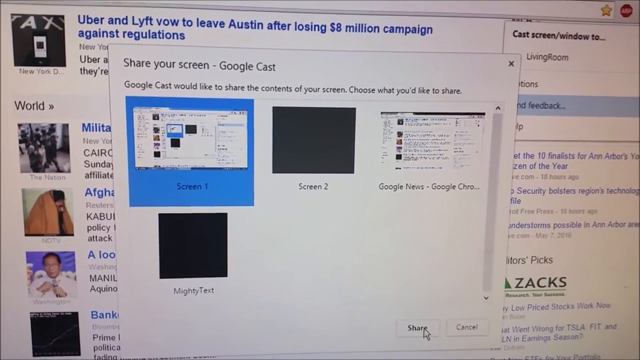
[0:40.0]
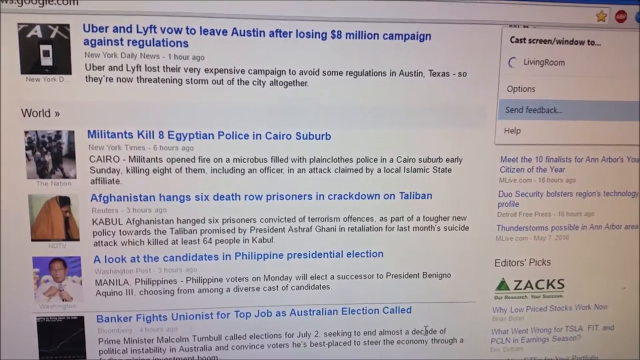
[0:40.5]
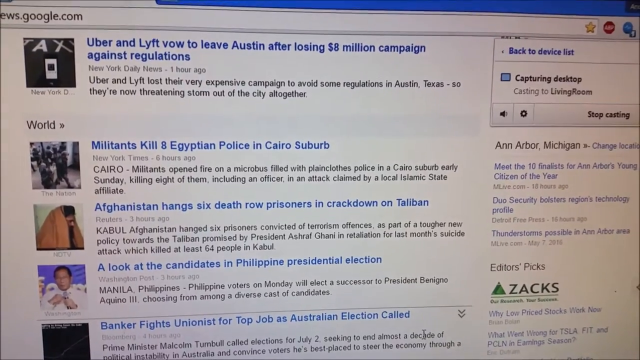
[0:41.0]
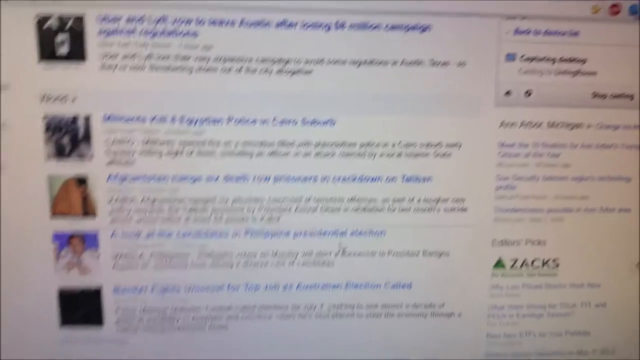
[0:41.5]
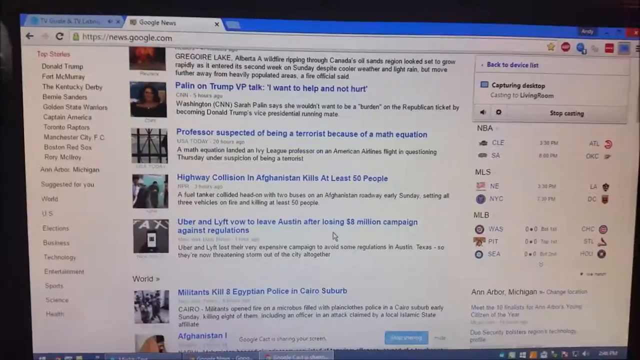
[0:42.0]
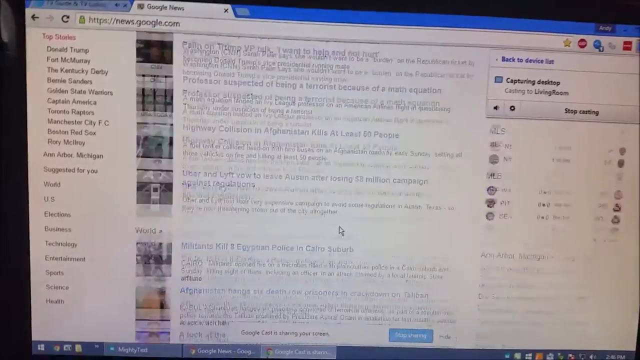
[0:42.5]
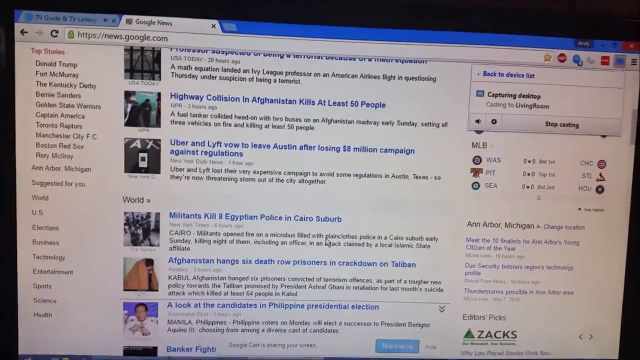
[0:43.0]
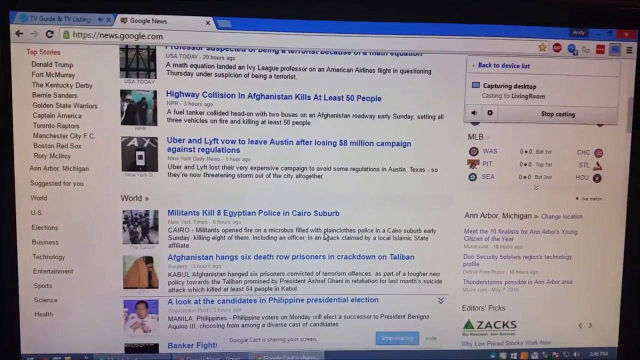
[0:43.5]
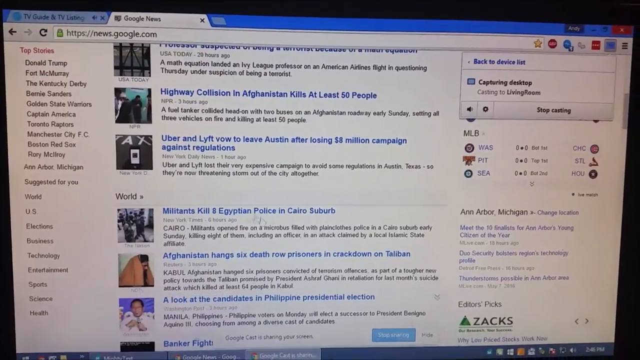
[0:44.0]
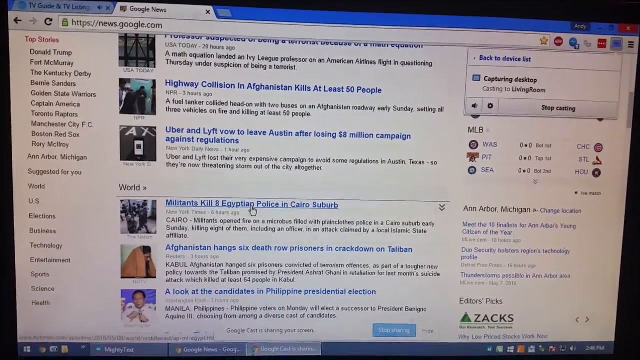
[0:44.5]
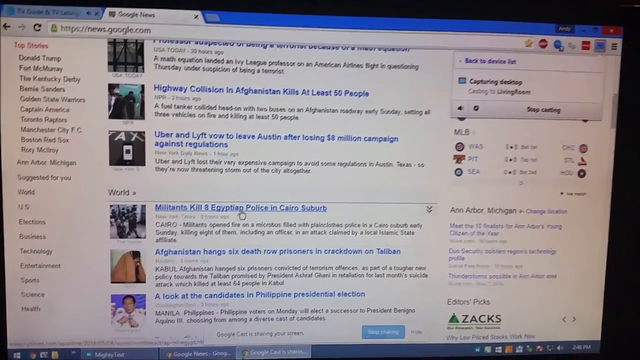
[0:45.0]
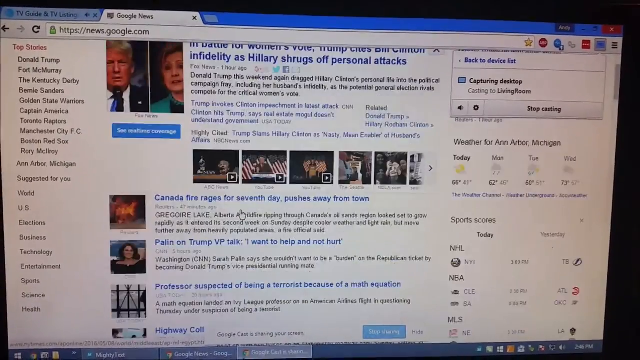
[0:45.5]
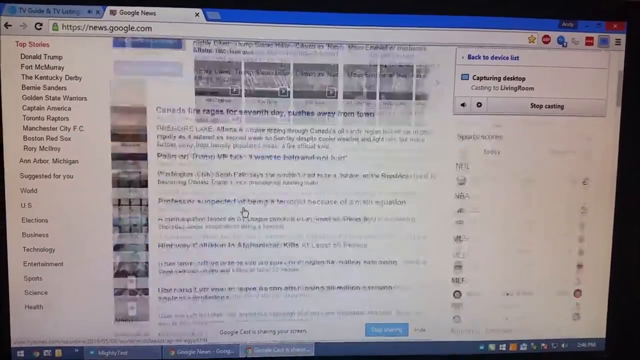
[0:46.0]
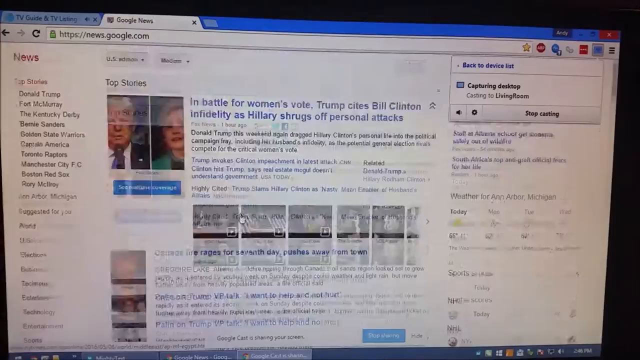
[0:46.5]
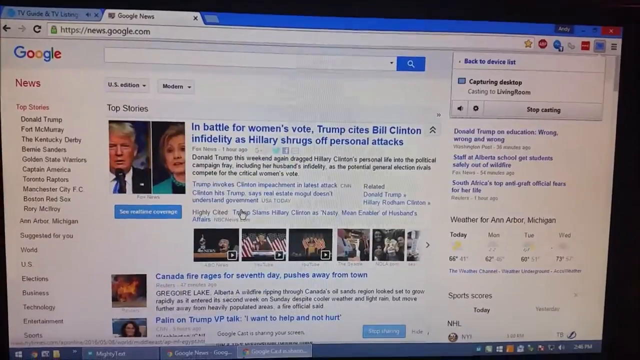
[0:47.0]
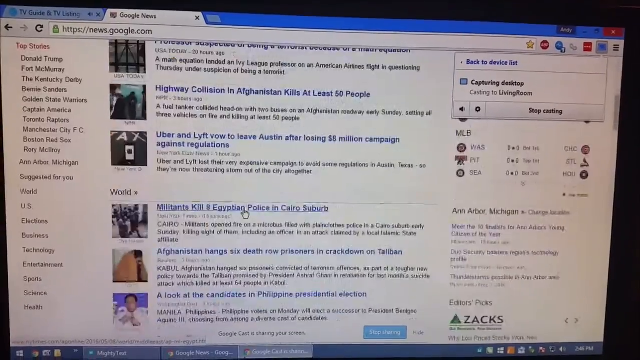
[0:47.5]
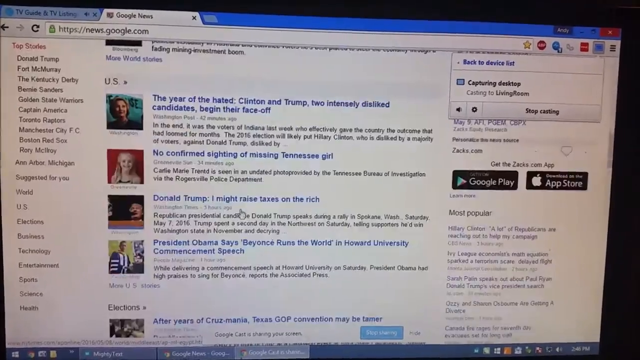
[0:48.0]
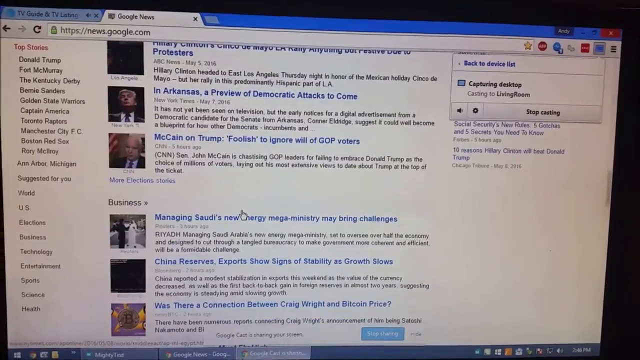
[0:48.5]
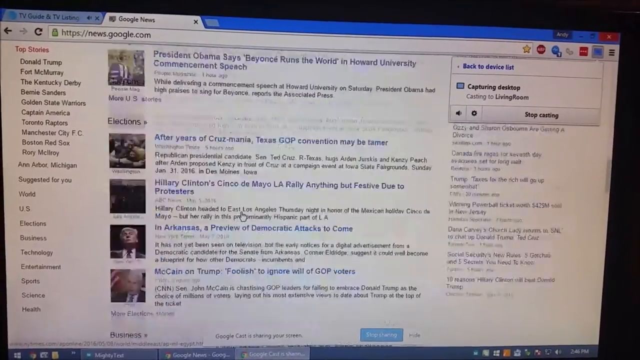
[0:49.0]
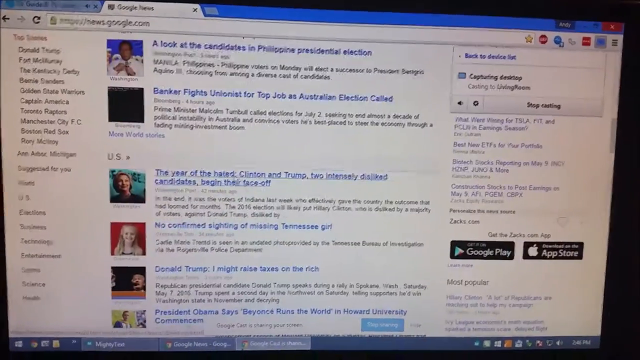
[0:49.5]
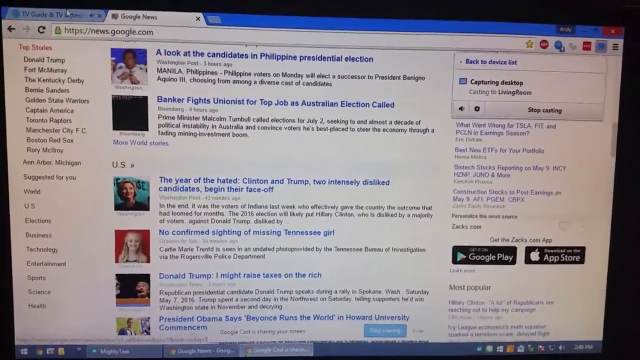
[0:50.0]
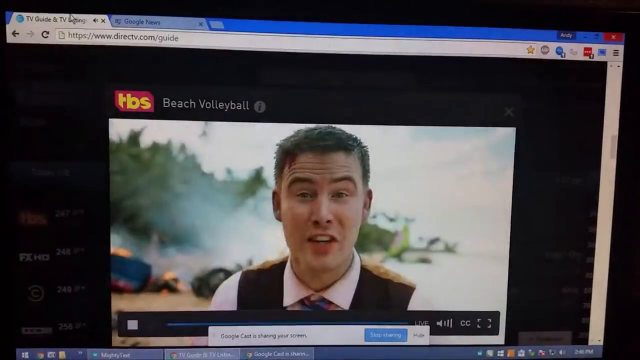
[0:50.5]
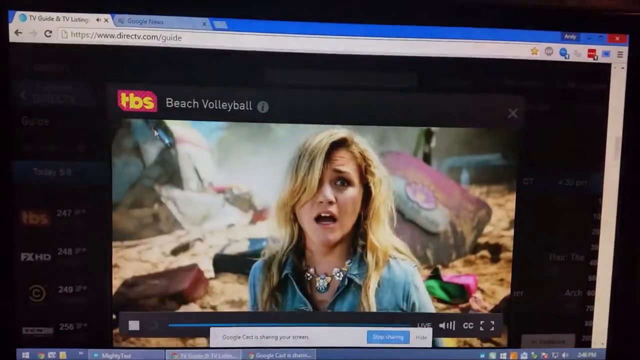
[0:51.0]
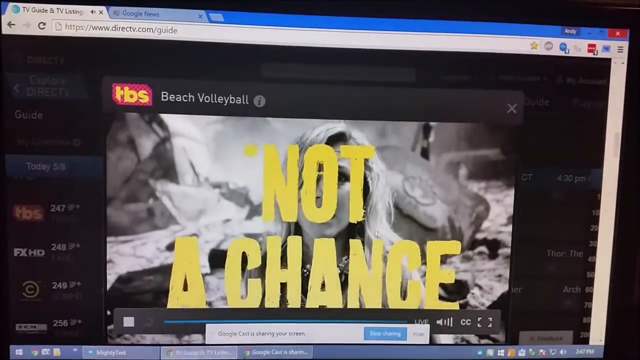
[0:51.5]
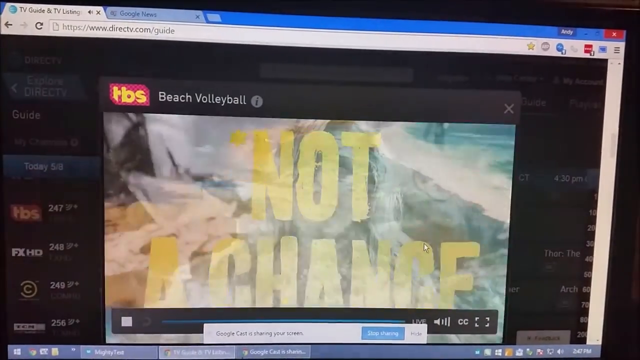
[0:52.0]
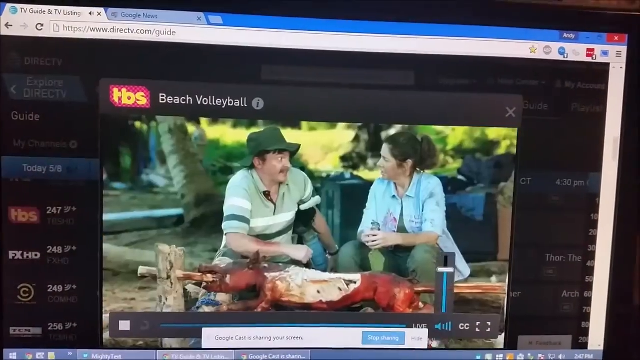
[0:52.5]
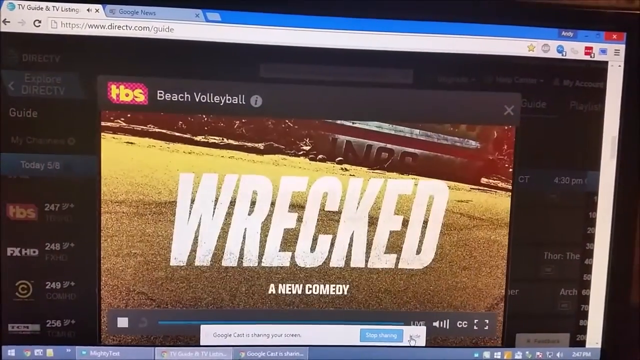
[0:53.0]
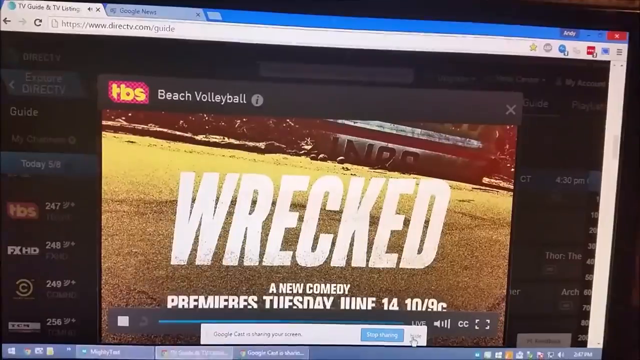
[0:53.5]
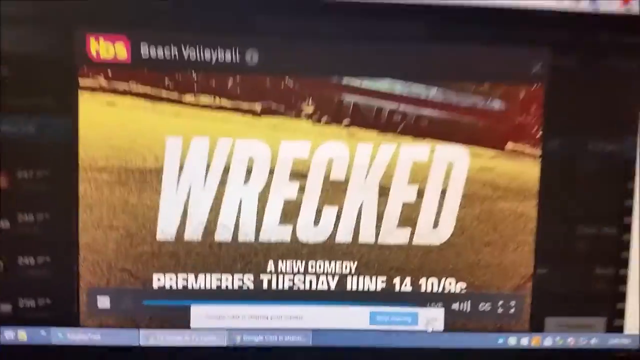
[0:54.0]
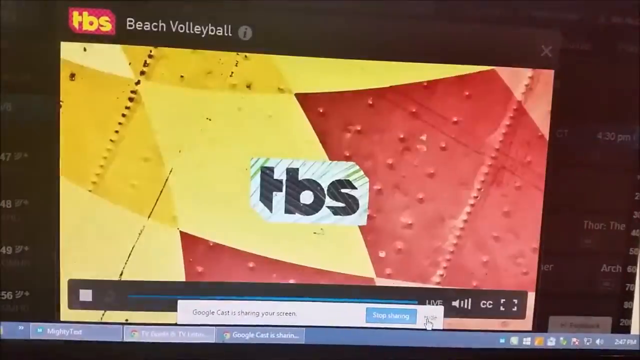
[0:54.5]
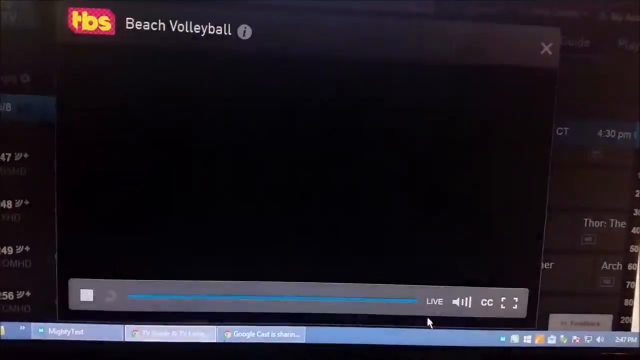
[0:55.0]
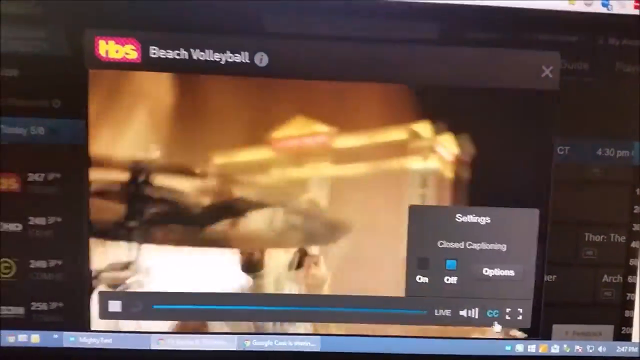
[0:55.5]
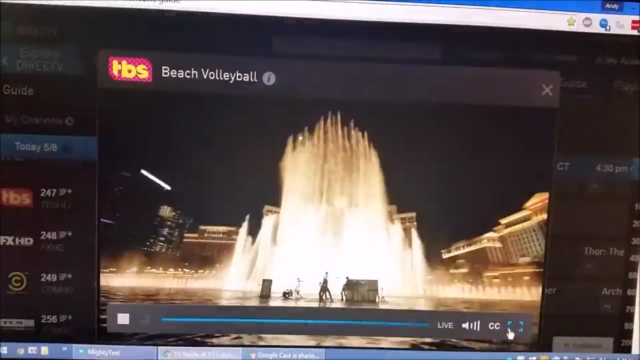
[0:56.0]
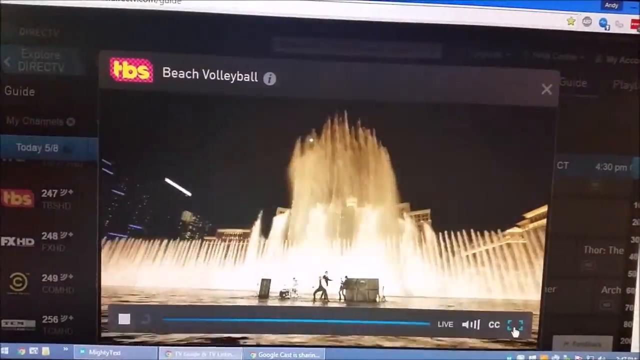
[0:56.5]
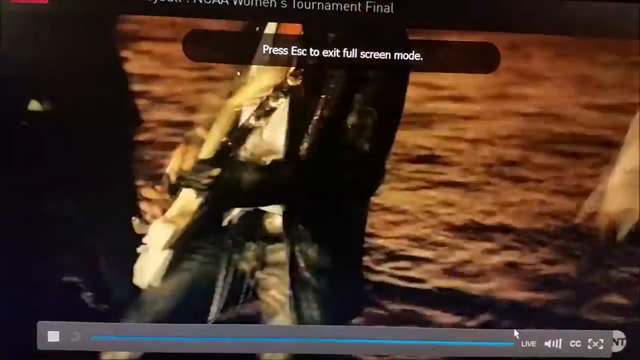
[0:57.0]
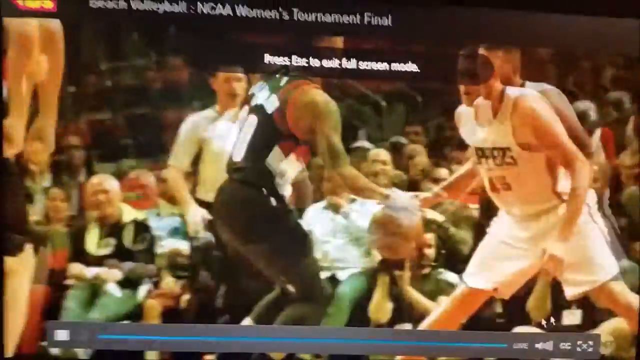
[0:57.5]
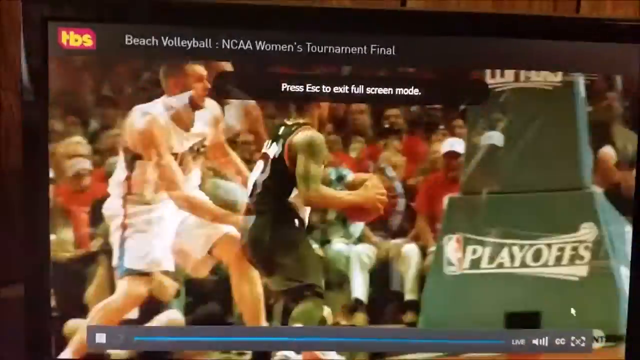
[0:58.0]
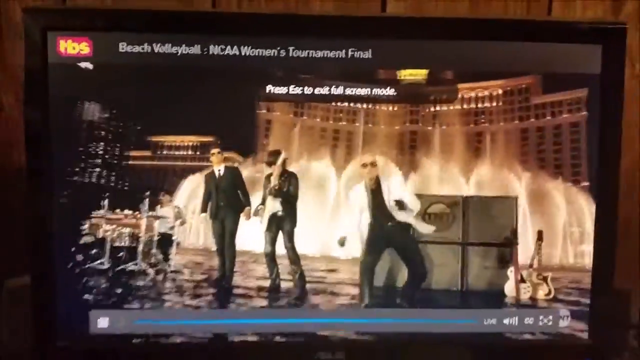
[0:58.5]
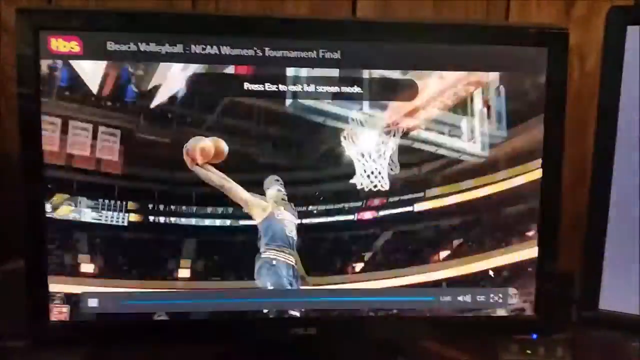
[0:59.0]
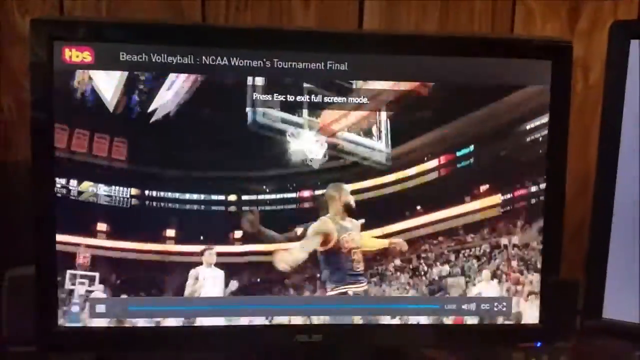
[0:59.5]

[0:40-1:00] A screen capture of news.google.com, the news section of Google, shows several articles. One is about a highway collision in Afghanistan that kills at least 50 people, with text describing a fuel tanker colliding head-on early Sunday, "setting three vehicles on fire and killing at least 50 people." Another article reads "Uber and Lyft vowed to leave Austin after losing $8 million dollars and campaigned against regulations." Under the world section, text reads "militants kill Egyptian police in Cairo suburb." On the right-hand side of the screen are several Major League Baseball teams playing against each other. In the top right-hand corner are the minimize sign, the maximize sign and the red X sign.